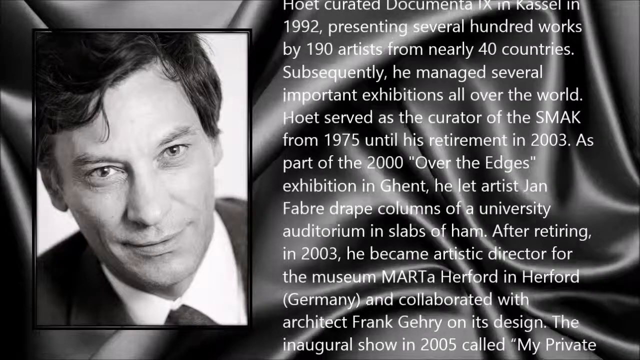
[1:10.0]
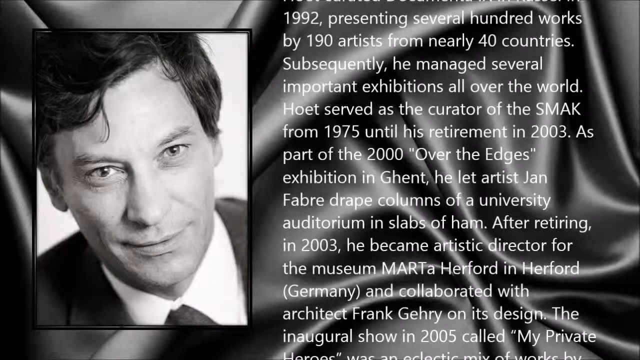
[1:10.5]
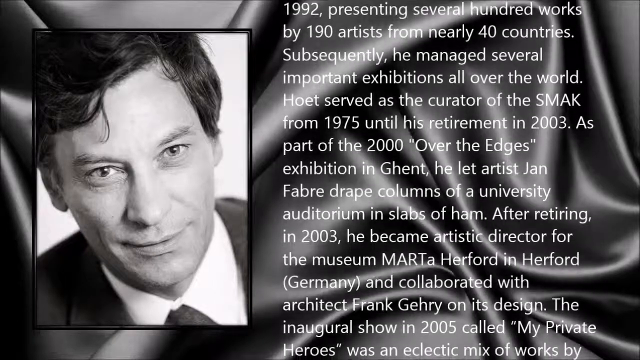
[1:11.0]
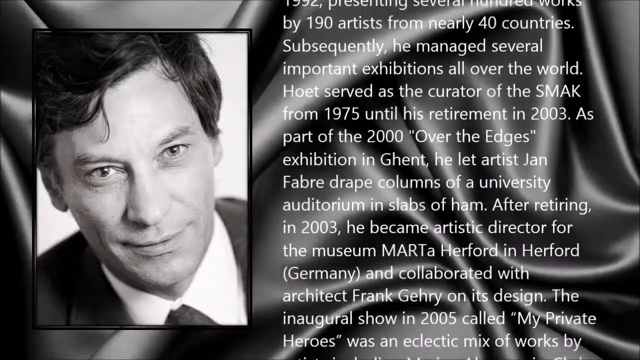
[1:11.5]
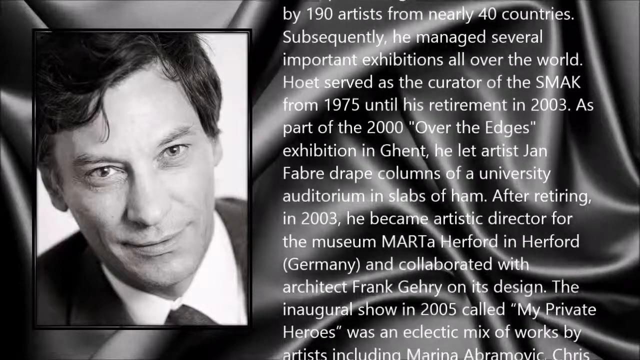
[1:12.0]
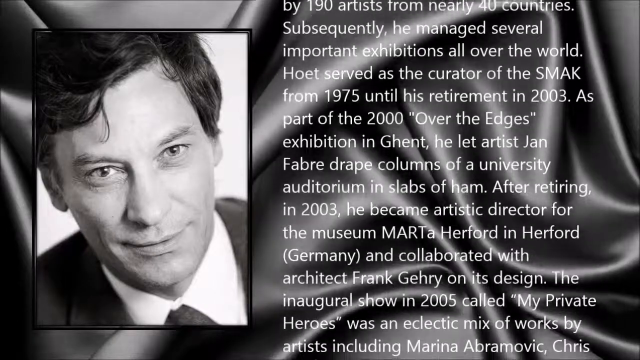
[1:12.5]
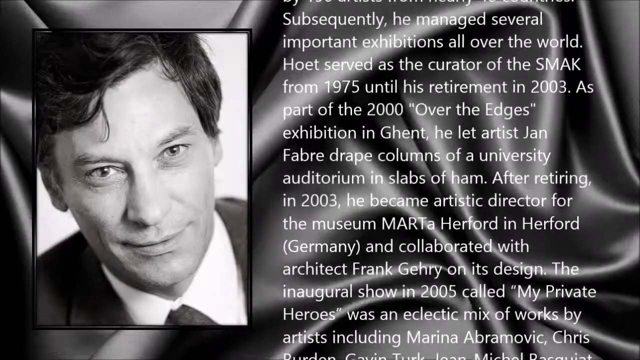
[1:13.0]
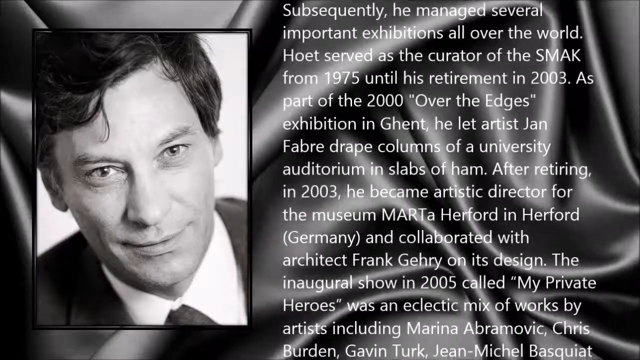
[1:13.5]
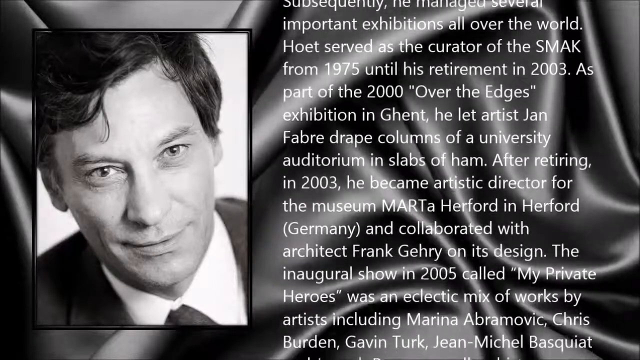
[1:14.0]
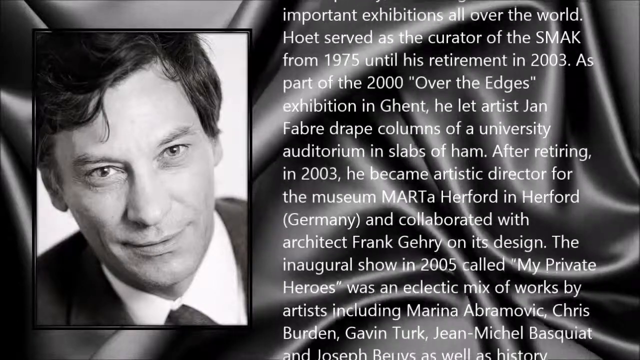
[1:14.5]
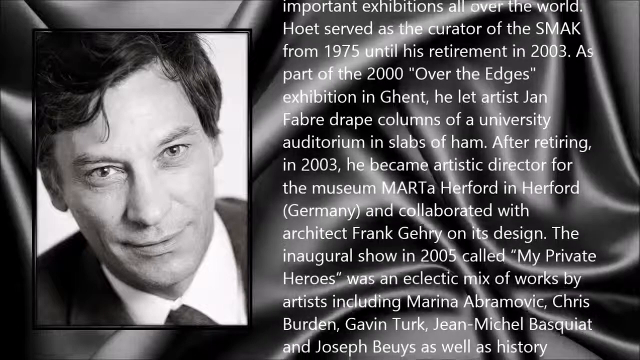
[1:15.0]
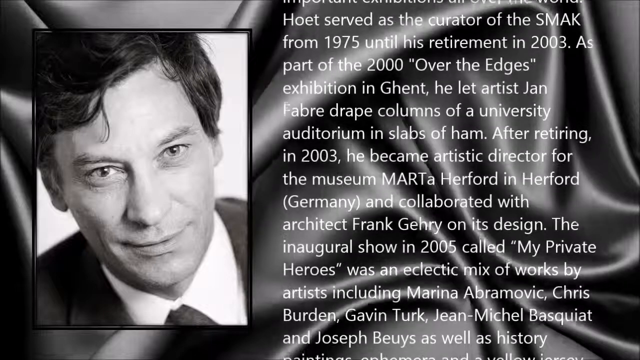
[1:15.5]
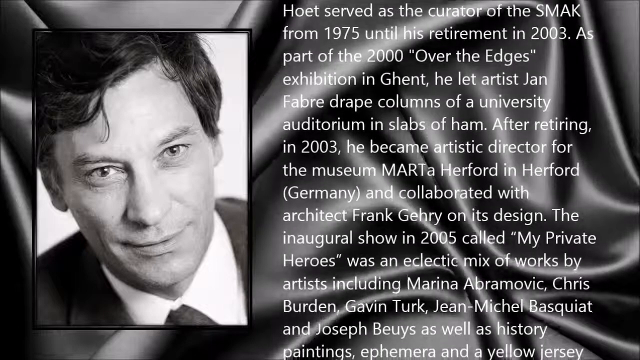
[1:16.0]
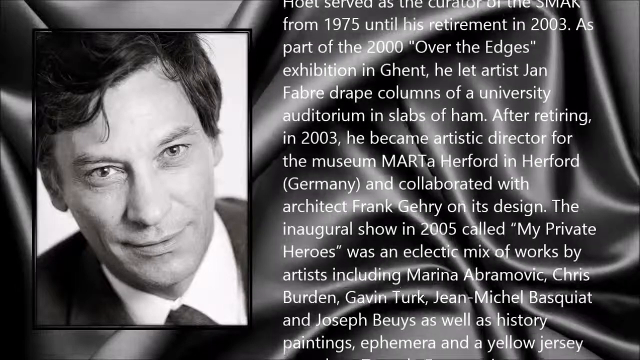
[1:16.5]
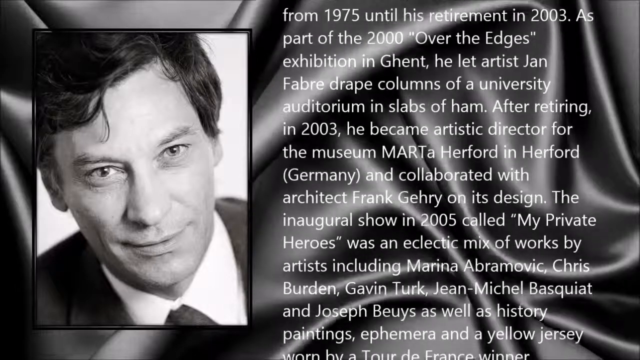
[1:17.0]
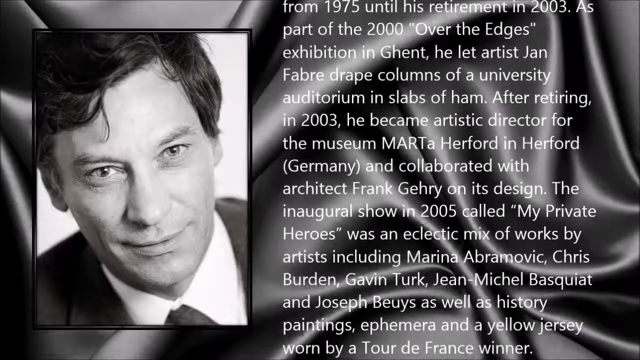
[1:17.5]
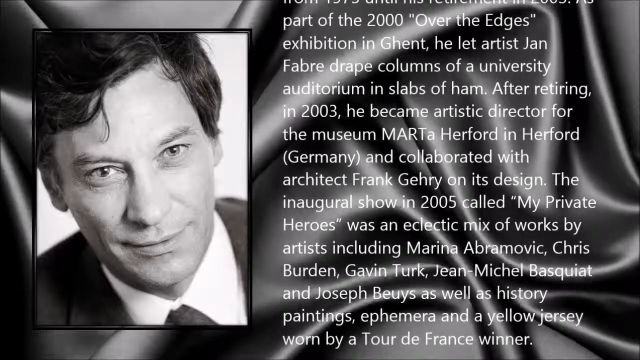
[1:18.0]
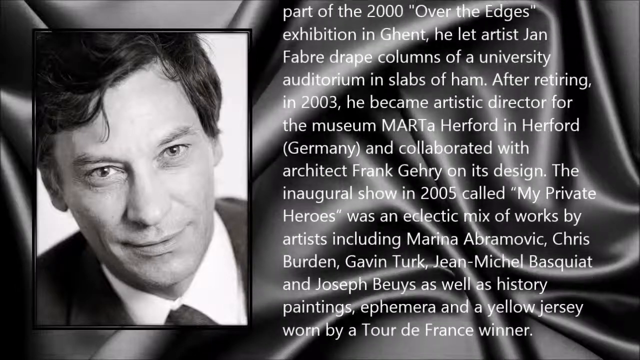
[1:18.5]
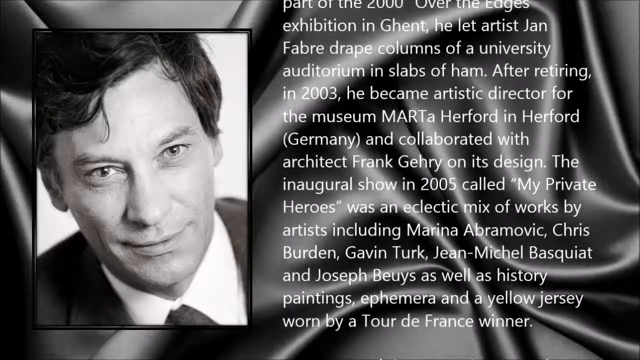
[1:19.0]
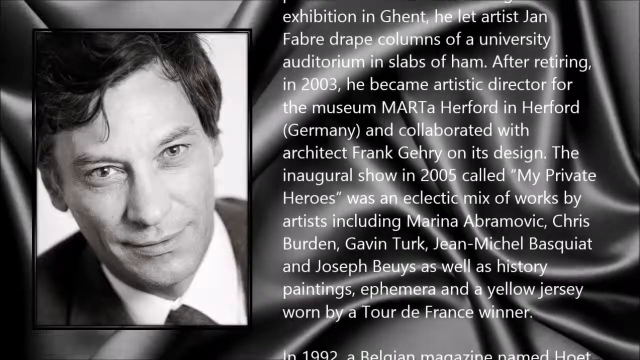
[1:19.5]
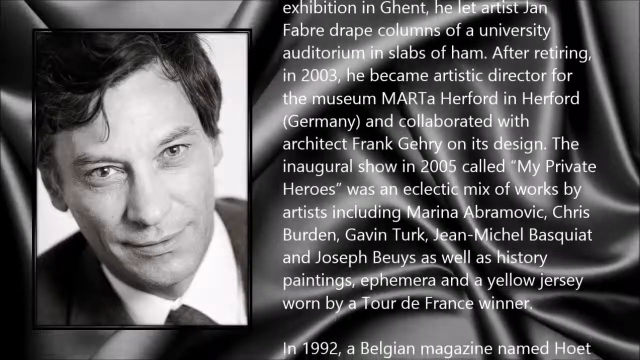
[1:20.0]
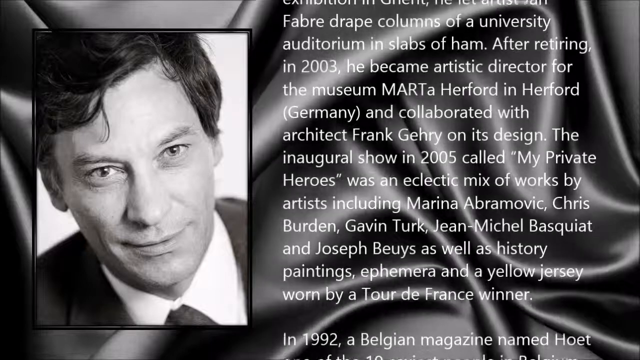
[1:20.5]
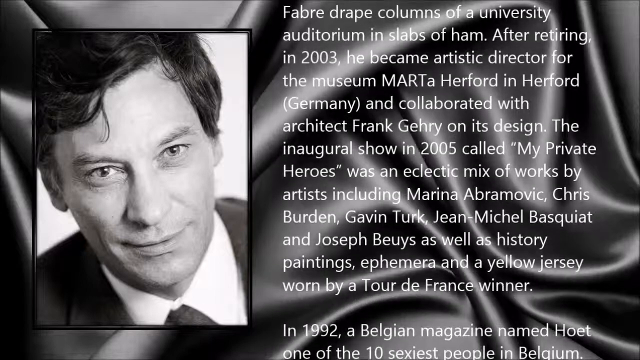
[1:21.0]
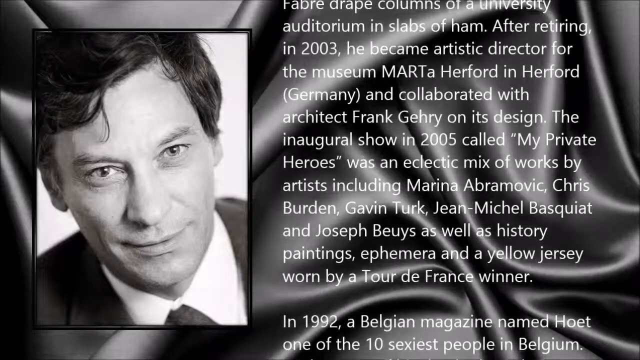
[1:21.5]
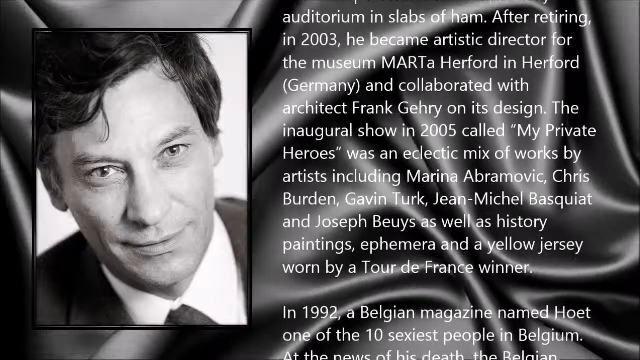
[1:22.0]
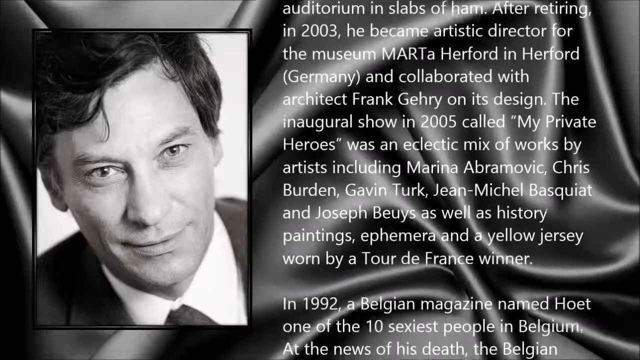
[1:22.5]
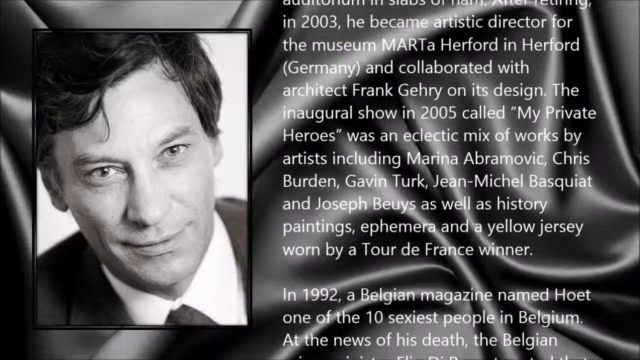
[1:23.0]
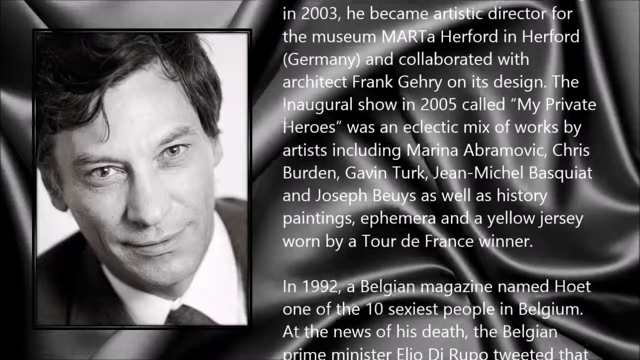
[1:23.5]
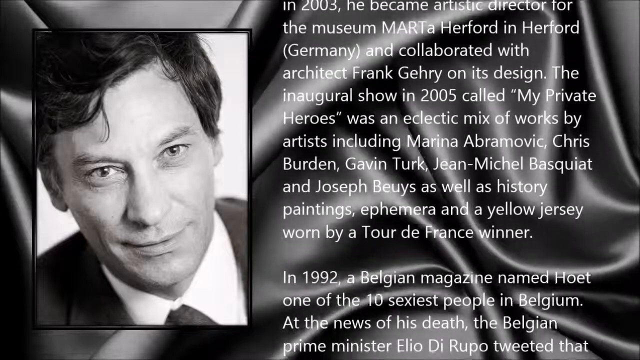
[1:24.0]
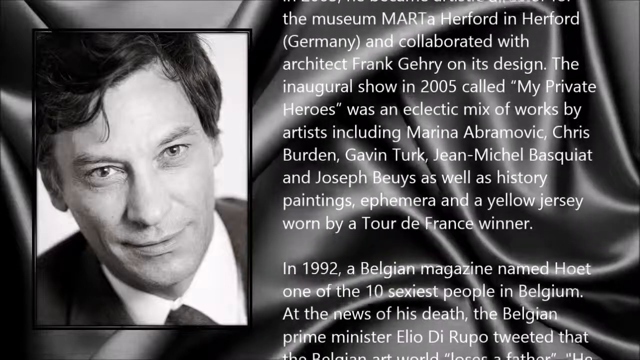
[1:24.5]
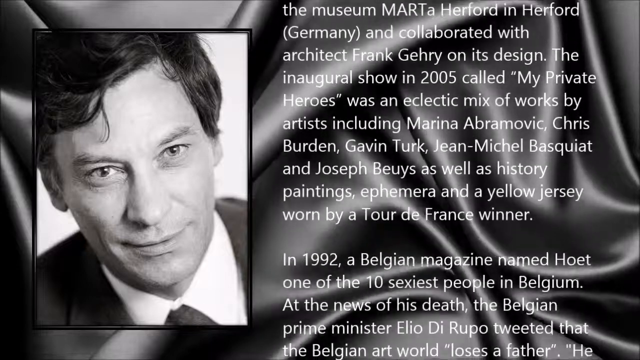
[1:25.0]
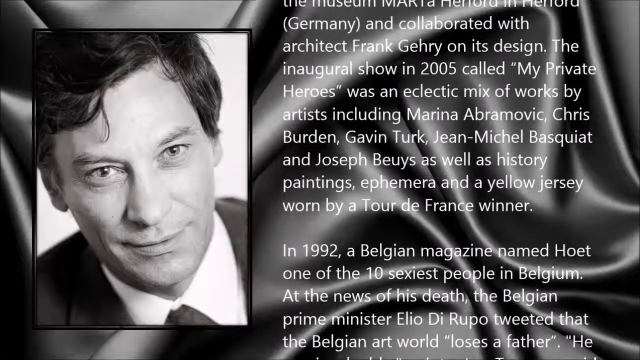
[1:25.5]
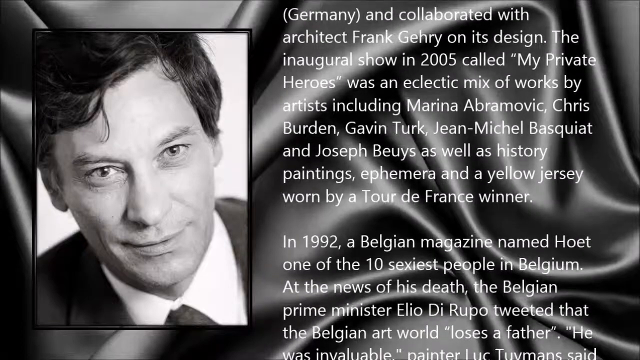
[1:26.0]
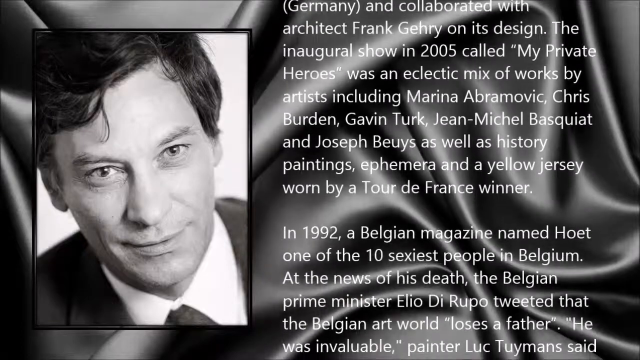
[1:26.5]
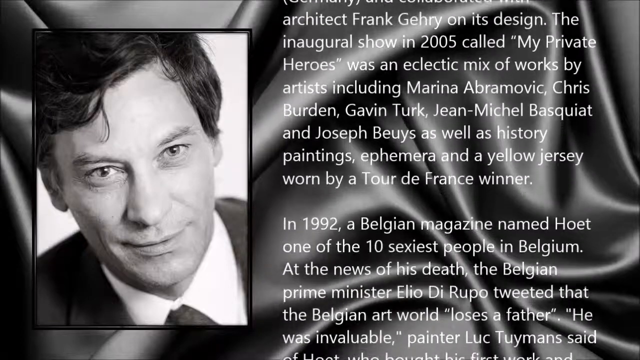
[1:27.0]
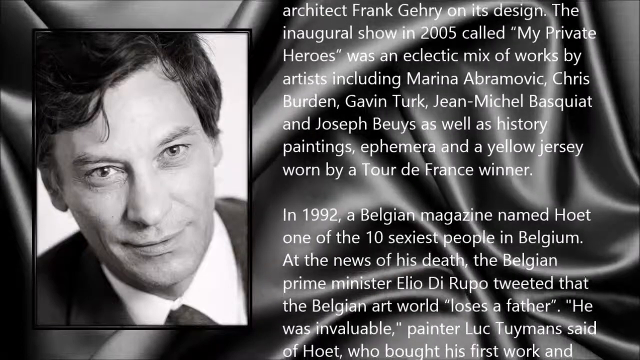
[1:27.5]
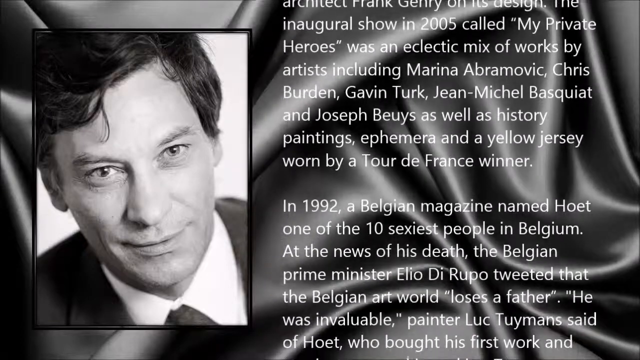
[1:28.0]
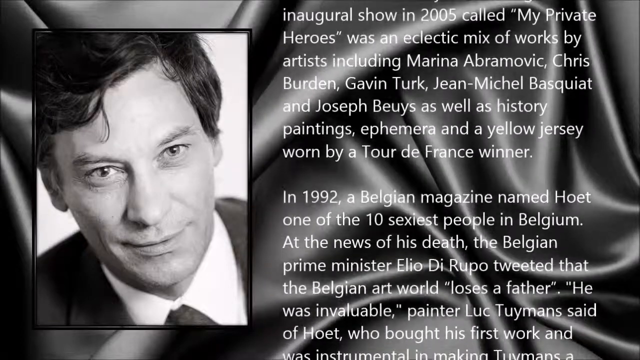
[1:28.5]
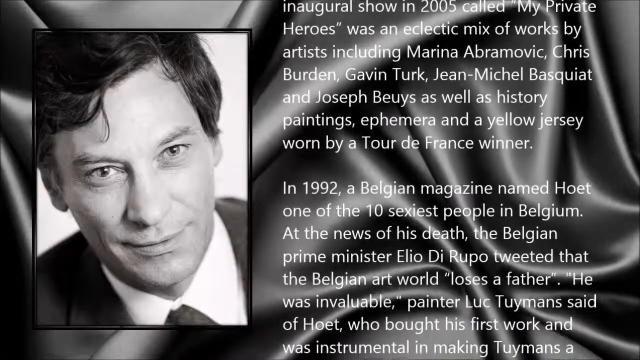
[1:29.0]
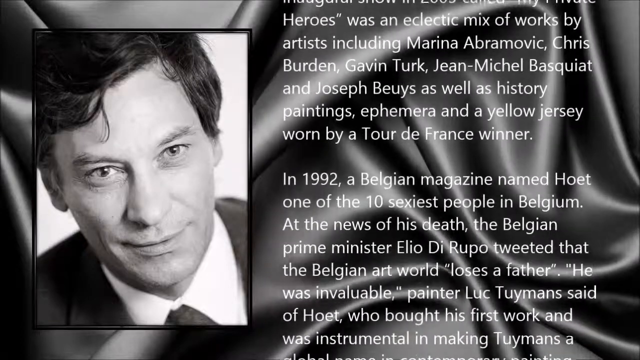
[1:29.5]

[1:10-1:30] The words continue to roll by and are a little clearer. The text reads: "The inaugural show in 2005 called My Private Euros was an eclectic mix of works by artists including Marina Abramovic, Chris Burden, Gavin Turk, John-Michael Basquiat and Joseph Beuys as well as history paintings Ephemera and a yellow jersey worn by a Tour de France winner." After a small space it continues: "In 1992 a Belgium magazine named Hoet one of the ten sexiest people in Belgium. At the news of his death the Belgian Prime Minister Elio de Rupo tweeted that the Belgian art world loses a father. He was invaluable painter Luc Tuymans said of Hoet, who bought his first work and was instrumental in making Tuymans a...", where the text is cut off.